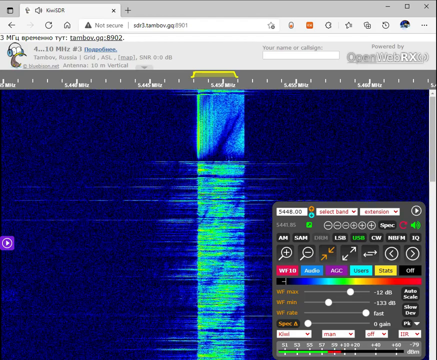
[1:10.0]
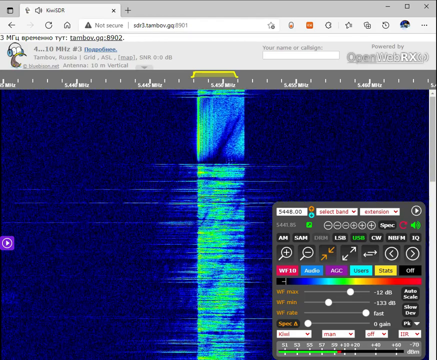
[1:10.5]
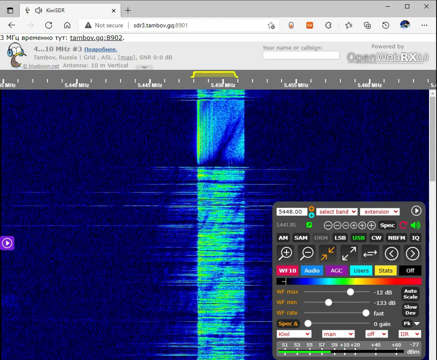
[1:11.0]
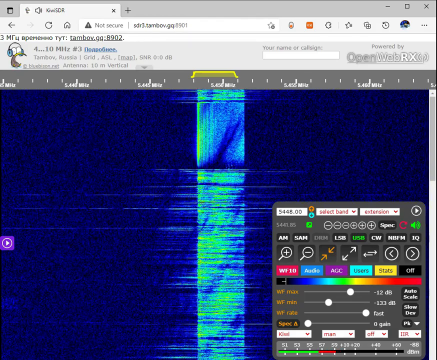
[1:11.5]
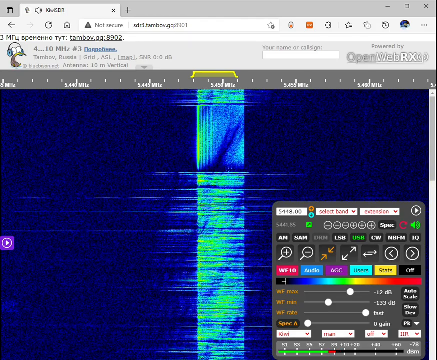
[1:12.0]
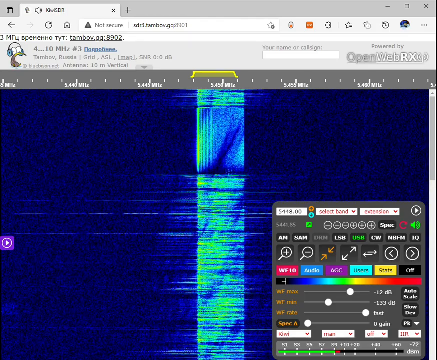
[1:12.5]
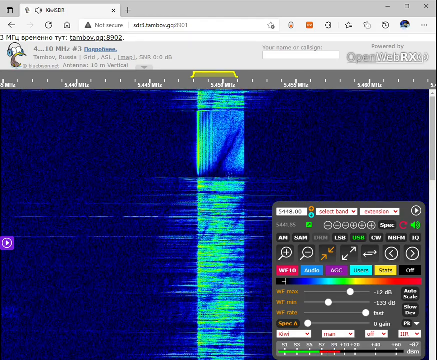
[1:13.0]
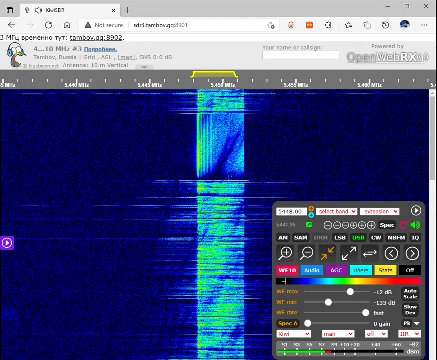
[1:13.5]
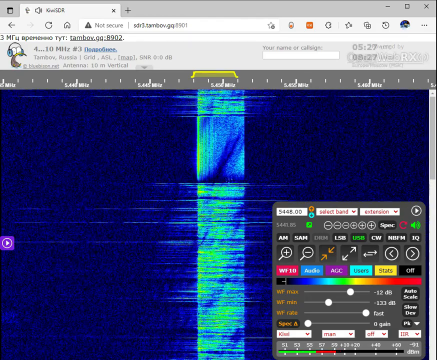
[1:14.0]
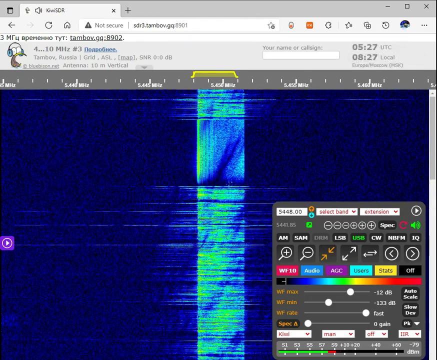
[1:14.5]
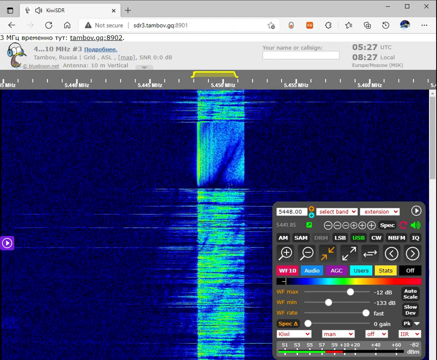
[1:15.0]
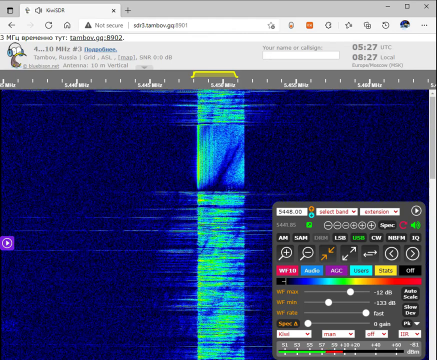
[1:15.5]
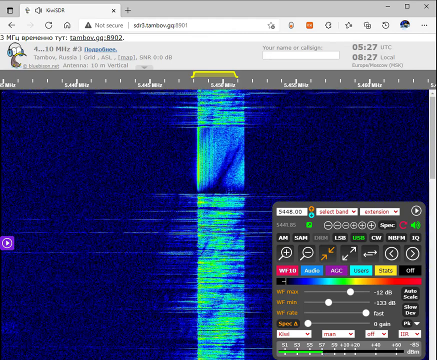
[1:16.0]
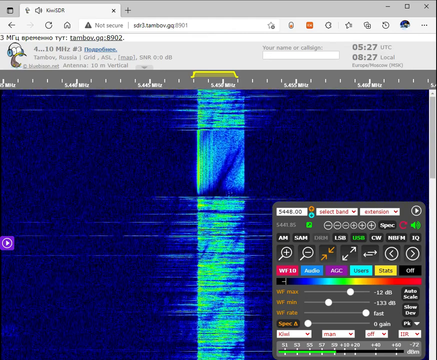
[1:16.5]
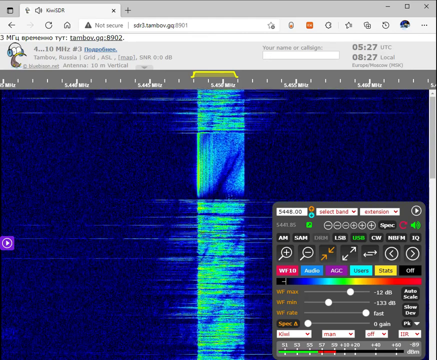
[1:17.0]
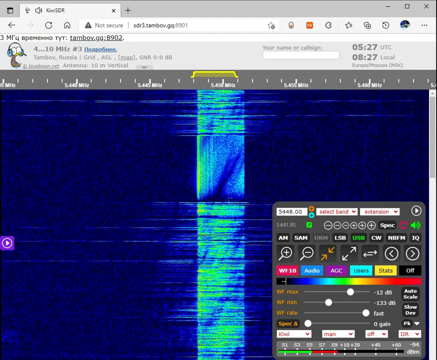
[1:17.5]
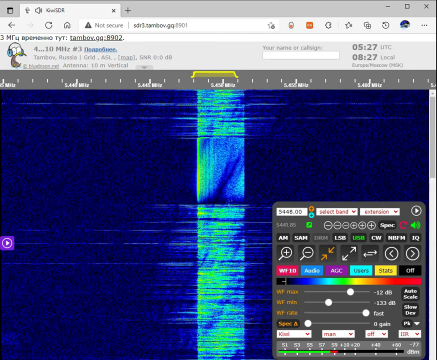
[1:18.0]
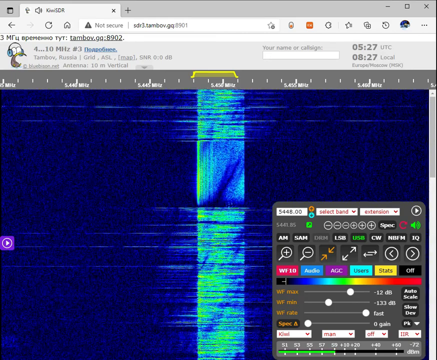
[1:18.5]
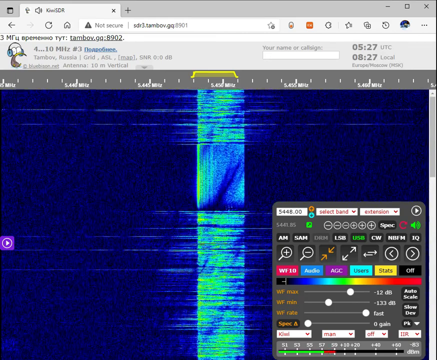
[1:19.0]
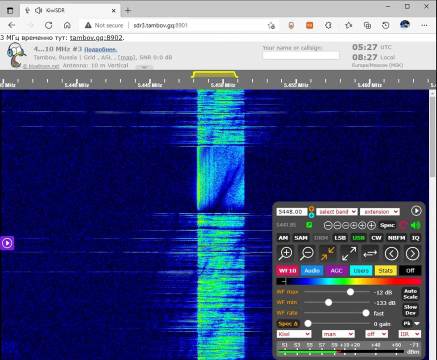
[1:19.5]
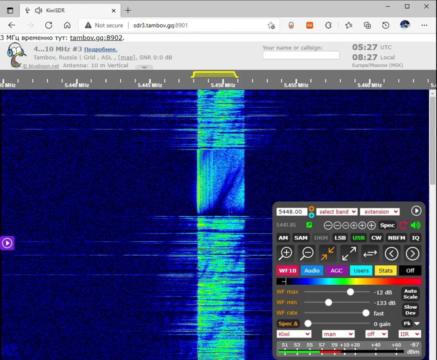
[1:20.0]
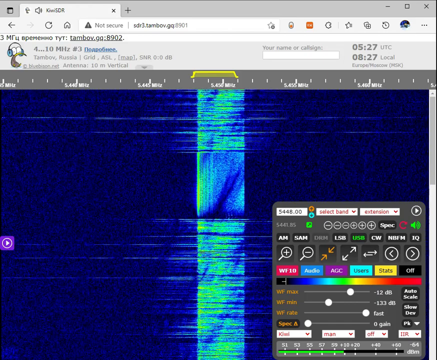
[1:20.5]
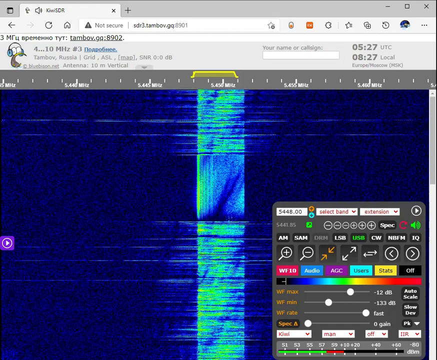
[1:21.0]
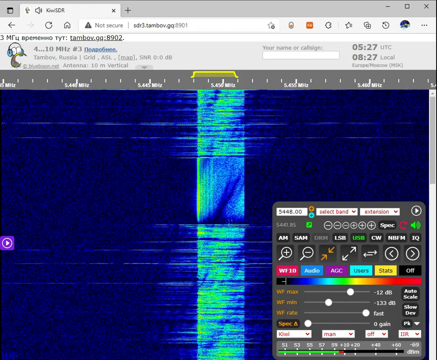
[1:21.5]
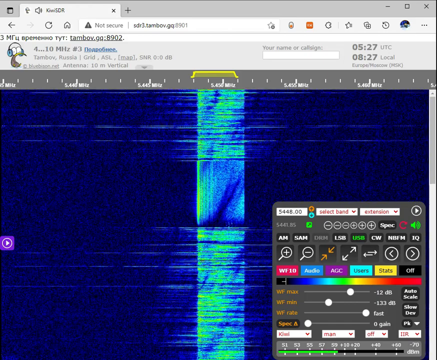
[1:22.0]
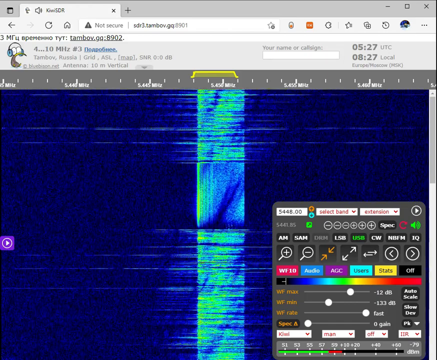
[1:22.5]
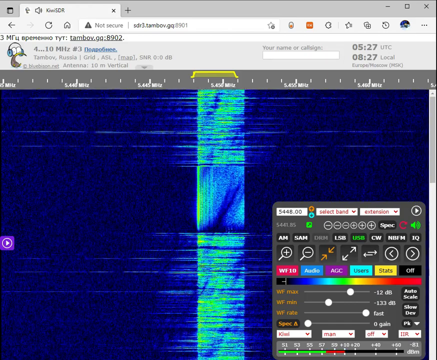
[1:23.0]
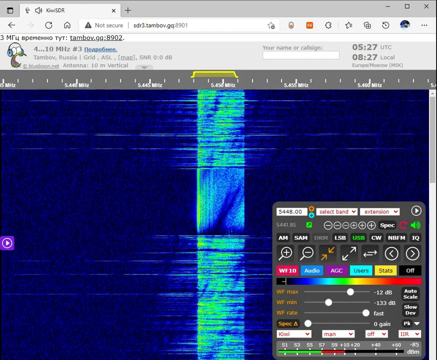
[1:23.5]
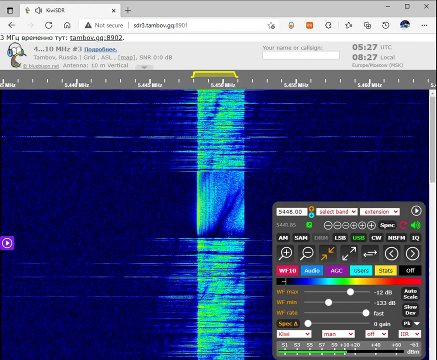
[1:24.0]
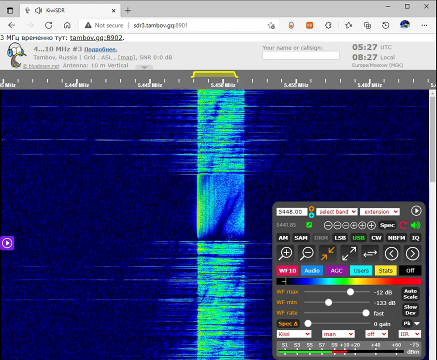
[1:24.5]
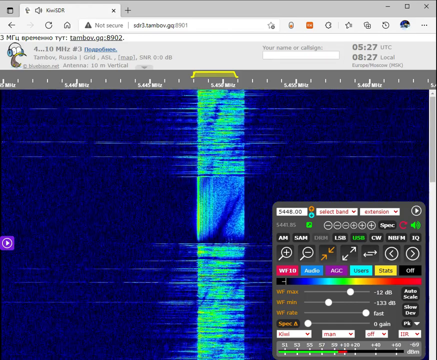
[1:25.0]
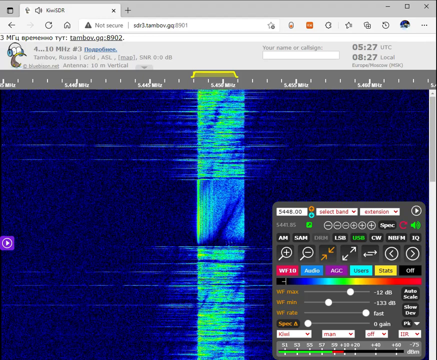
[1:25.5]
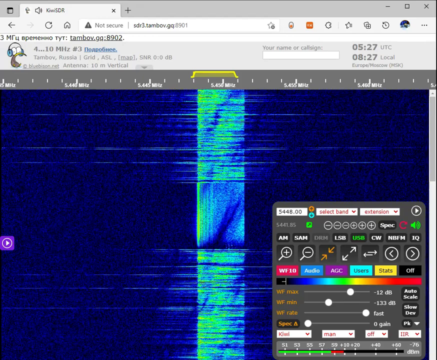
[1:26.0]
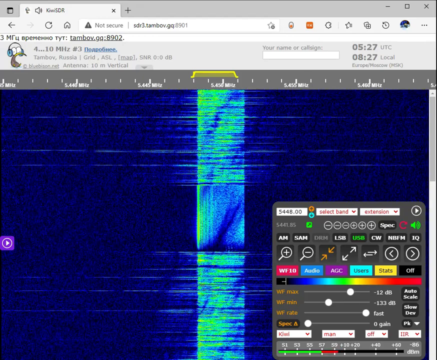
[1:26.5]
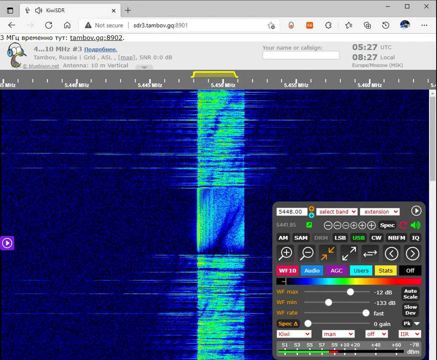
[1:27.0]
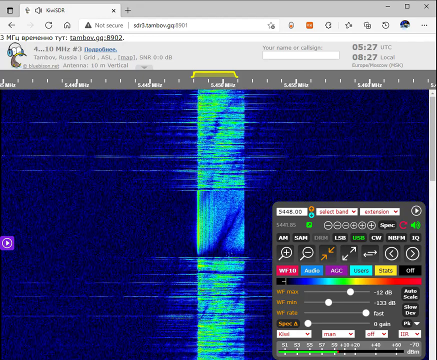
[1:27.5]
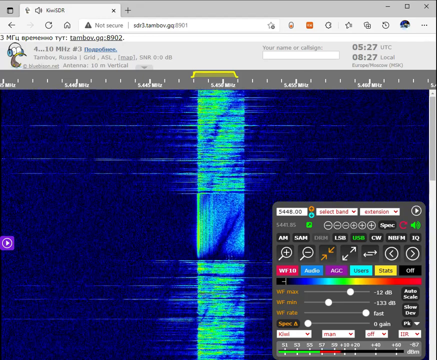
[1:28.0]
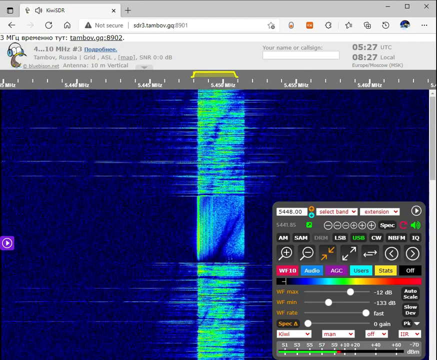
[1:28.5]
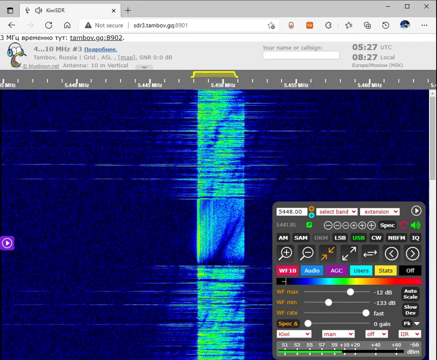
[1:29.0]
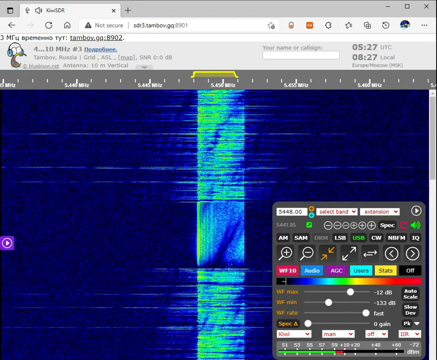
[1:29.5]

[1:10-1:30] A huge swoop of background blue runs from the left side toward the upper right, and then the display returns to its earlier pattern, with swoops that are less obvious. These are shadowy swoops running from the bottom left to the top right, appearing continuously one after another in a repeating pattern. Everything else stays mostly the same. At the very bottom of the console in the bottom right corner, a line shows red or green and switches back and forth, looking like it may be following the pattern of a voice.